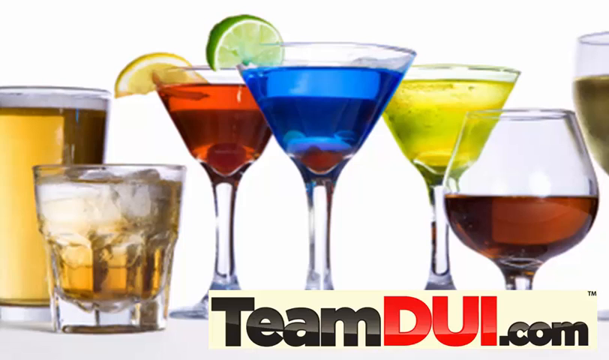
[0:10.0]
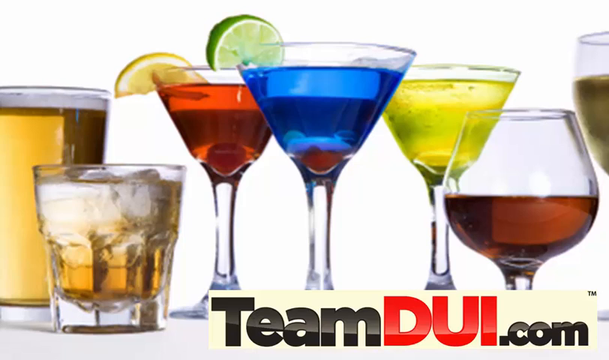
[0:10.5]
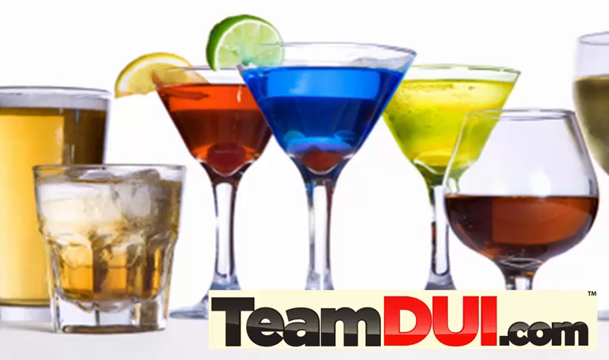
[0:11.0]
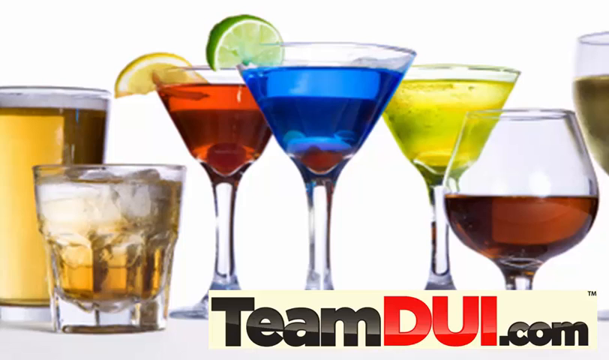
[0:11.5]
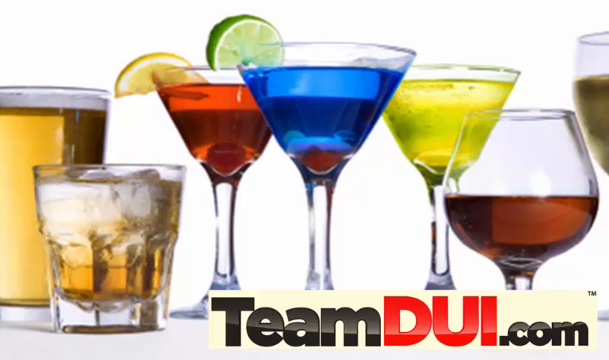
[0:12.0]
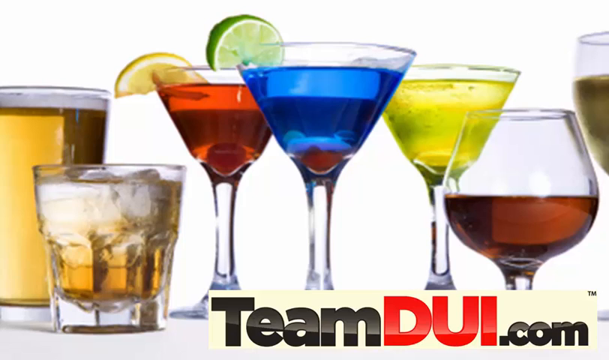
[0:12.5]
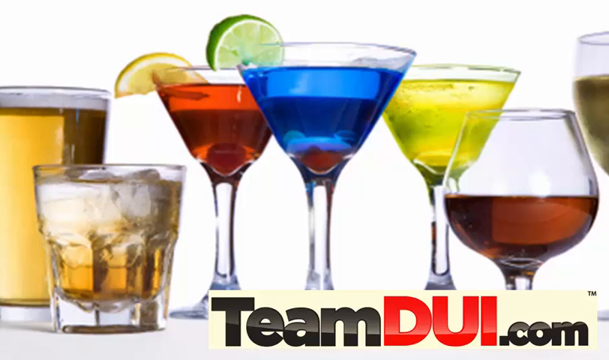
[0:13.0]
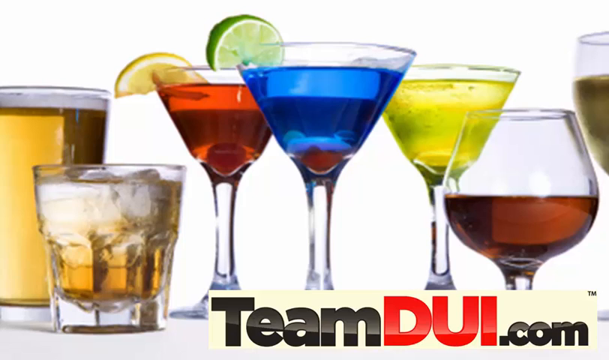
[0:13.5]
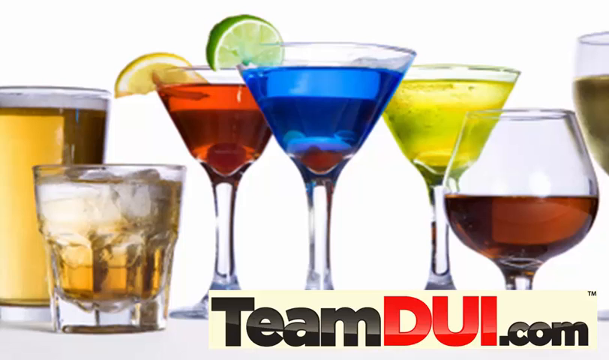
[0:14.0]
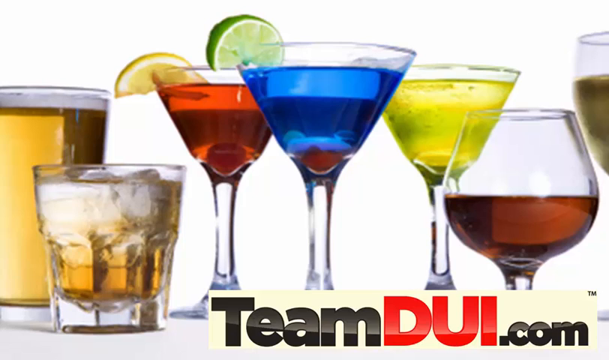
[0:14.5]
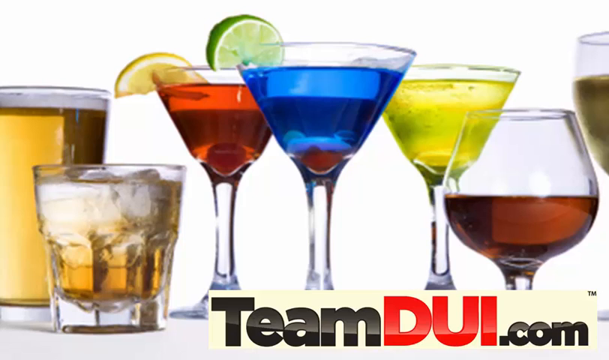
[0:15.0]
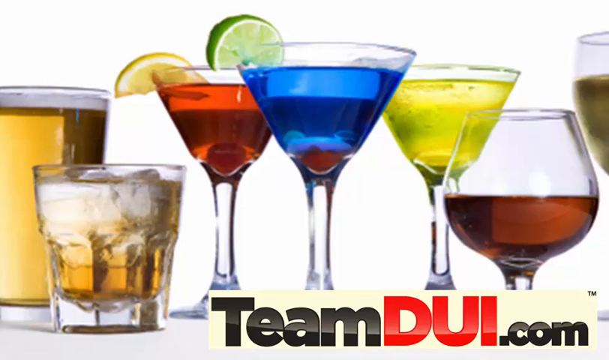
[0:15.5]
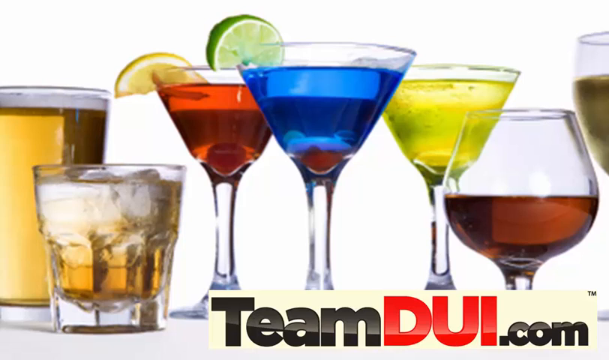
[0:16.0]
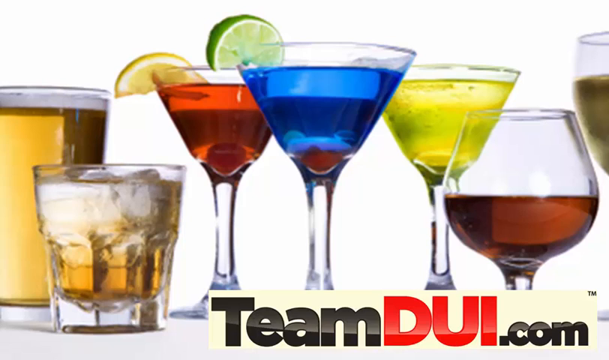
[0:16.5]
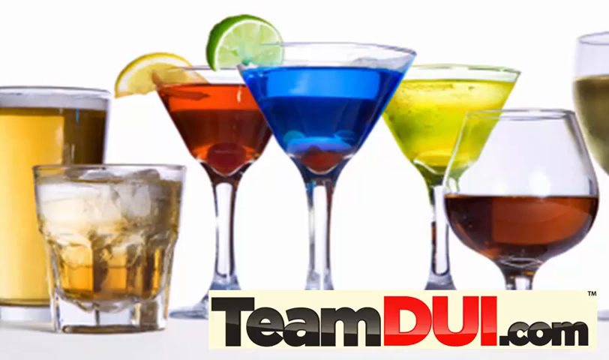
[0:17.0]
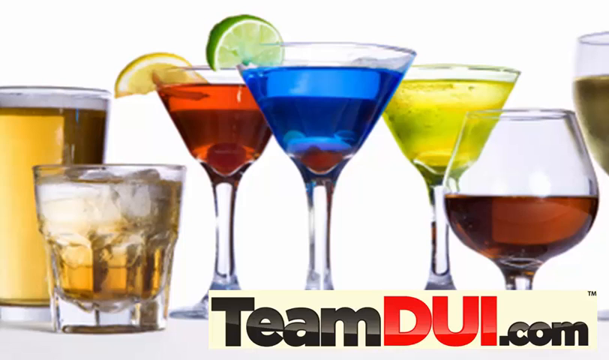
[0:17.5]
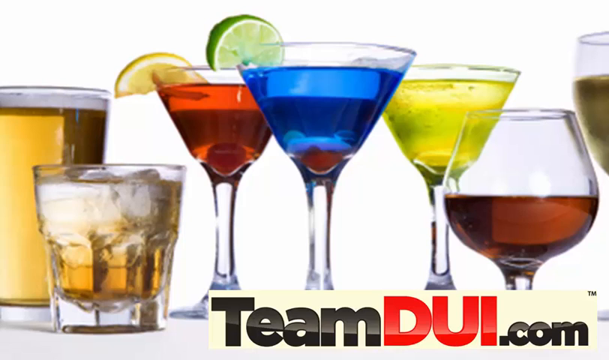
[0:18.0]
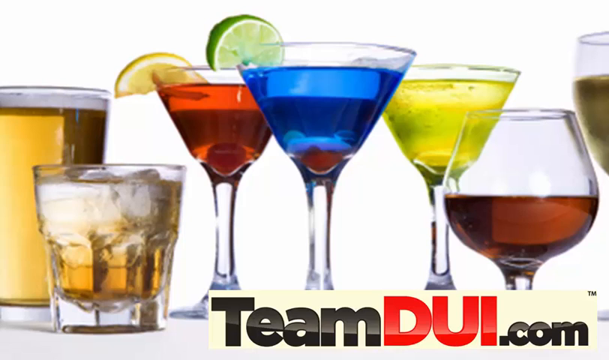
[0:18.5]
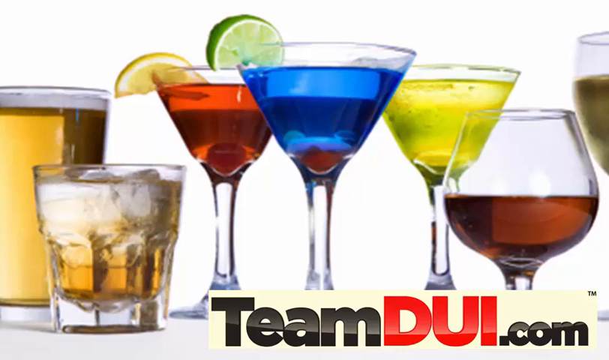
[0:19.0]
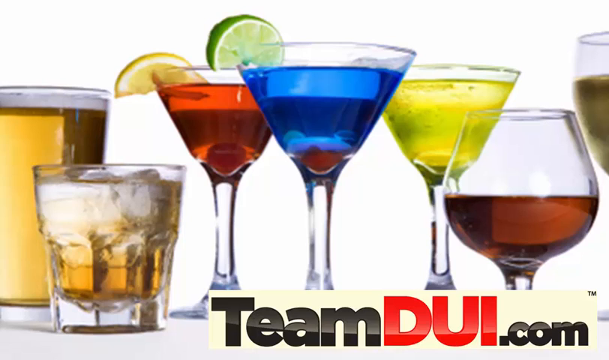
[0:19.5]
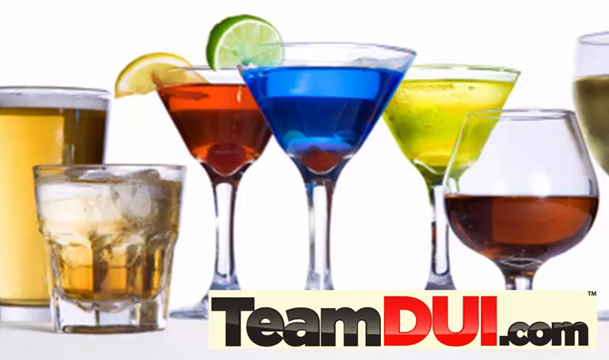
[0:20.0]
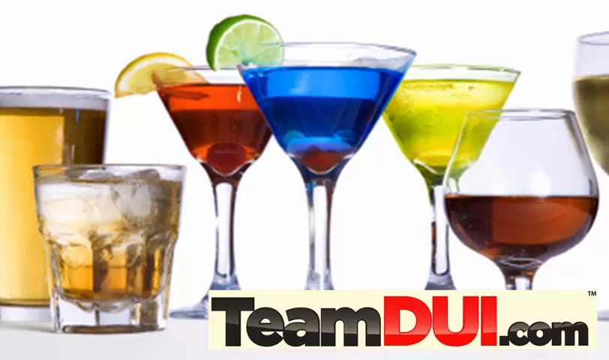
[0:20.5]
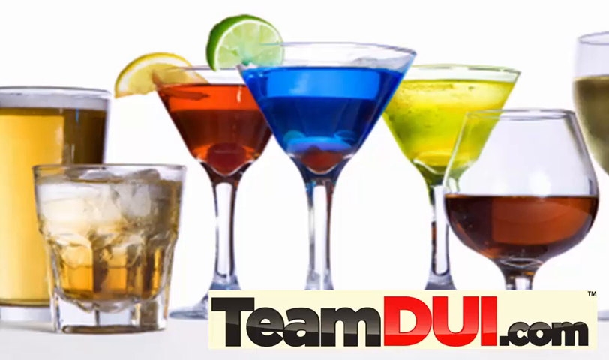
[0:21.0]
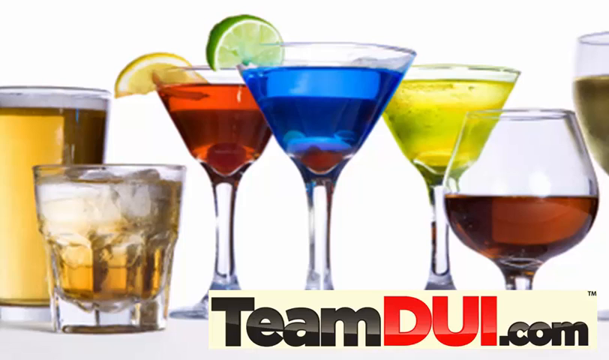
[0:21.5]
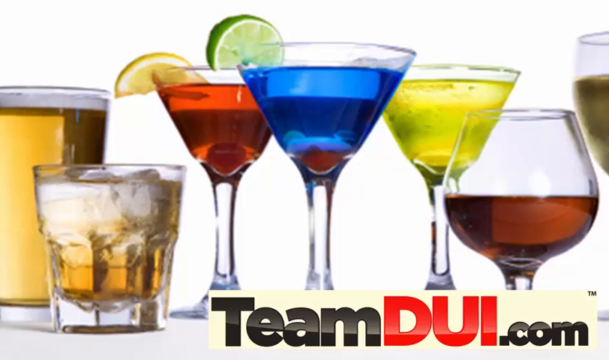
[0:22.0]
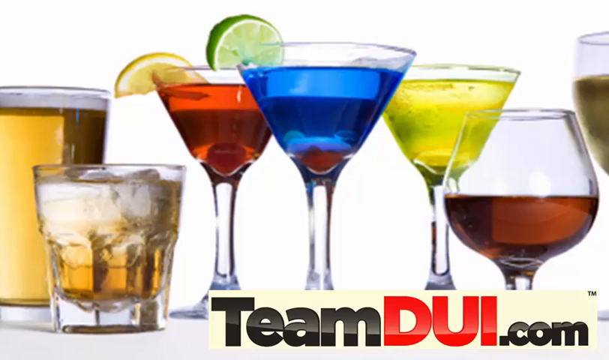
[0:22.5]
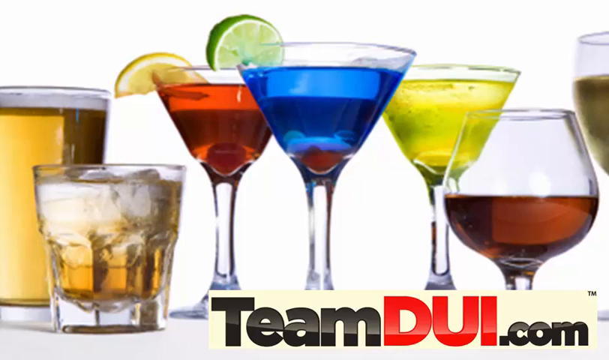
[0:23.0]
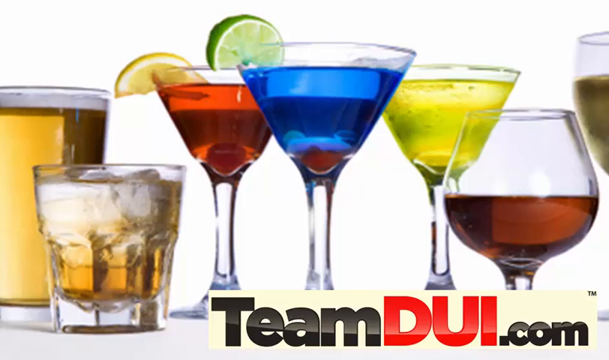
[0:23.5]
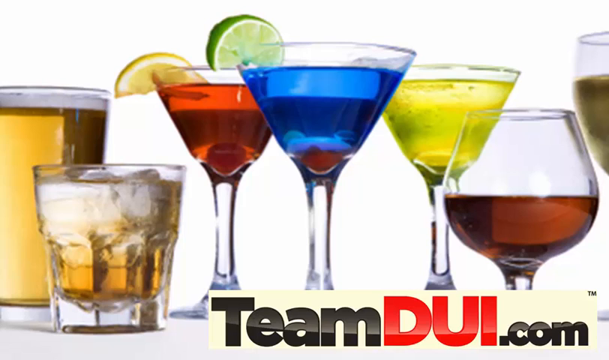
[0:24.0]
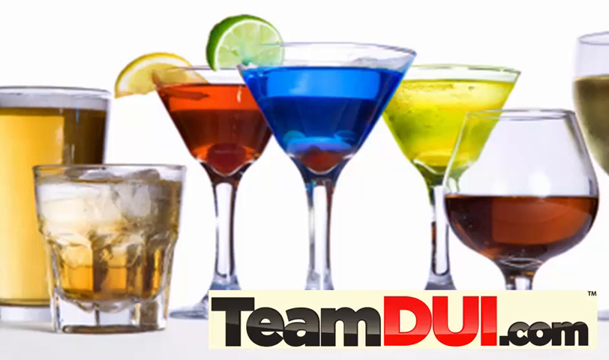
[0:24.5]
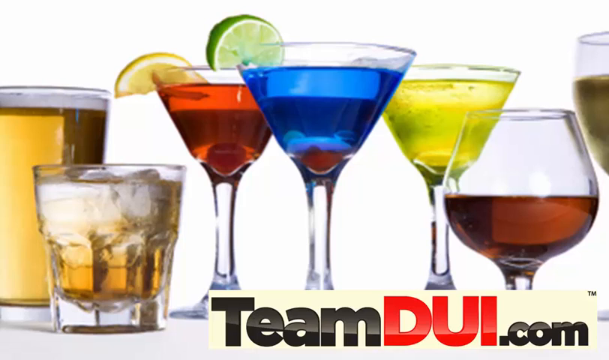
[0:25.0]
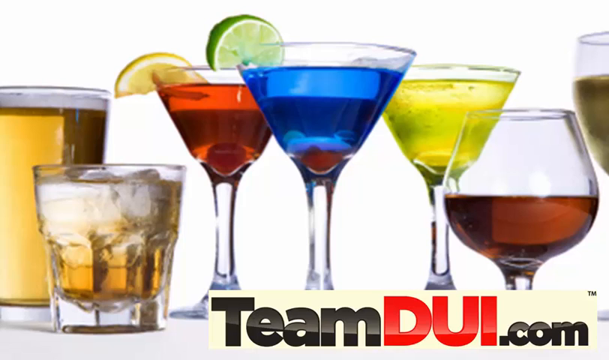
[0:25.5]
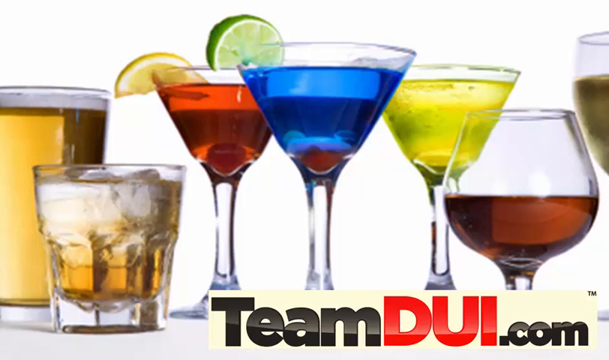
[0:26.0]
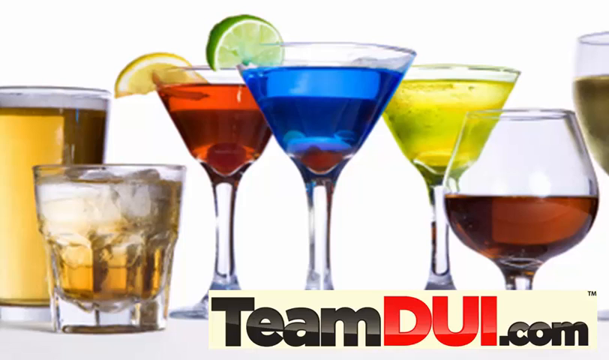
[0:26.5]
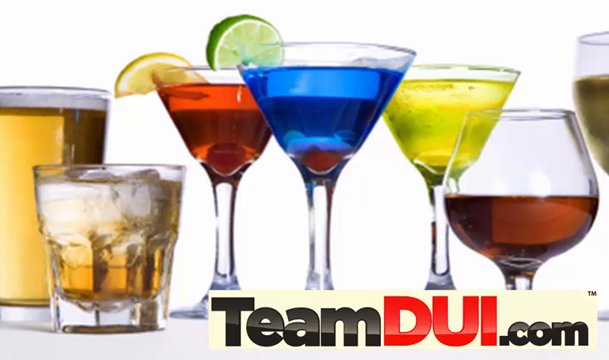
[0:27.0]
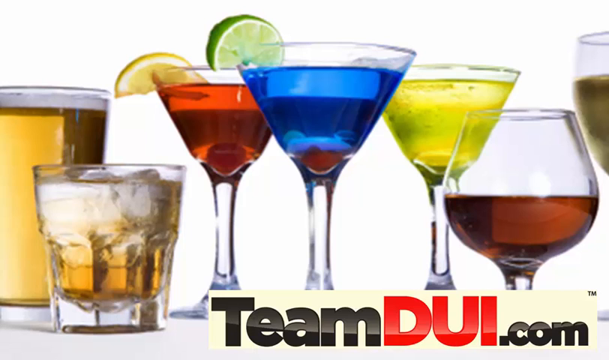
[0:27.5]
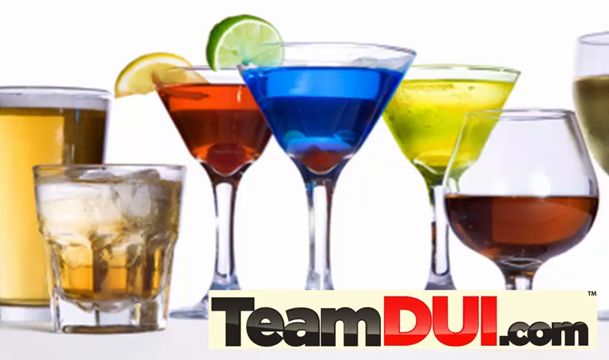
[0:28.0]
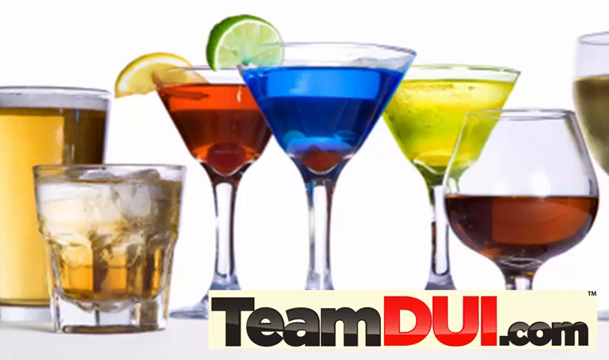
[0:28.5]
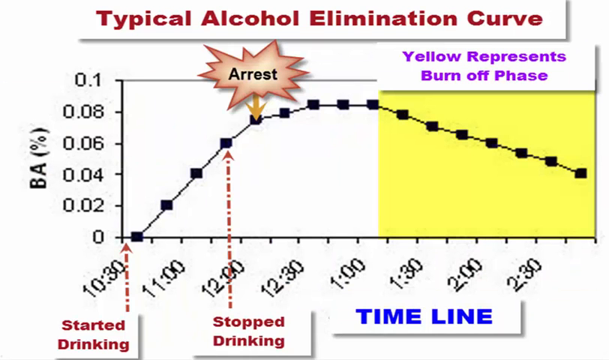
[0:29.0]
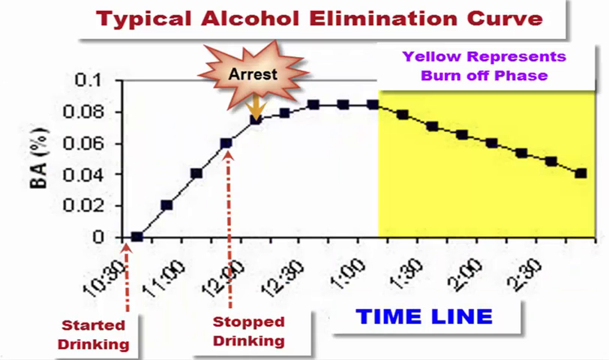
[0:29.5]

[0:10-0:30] The public service announcement-style ad for TeamDUI.com keeps showing the same drinks for a long time: a beer, a whiskey, three cocktails, maybe a brandy snifter, and a glass of white wine. A chart then appears, titled "typical alcohol elimination curve", with blood alcohol content on the left-hand, apparently Y, axis and time on the X axis, showing how long the alcohol takes to burn off. The curve starts at 10:30 at zero, is at .2 at 11 and .06 at 12 o'clock, and the chart marks arrest between .06 and .07. The curve keeps rising at 12:30 and reaches its peak at around 12:45.